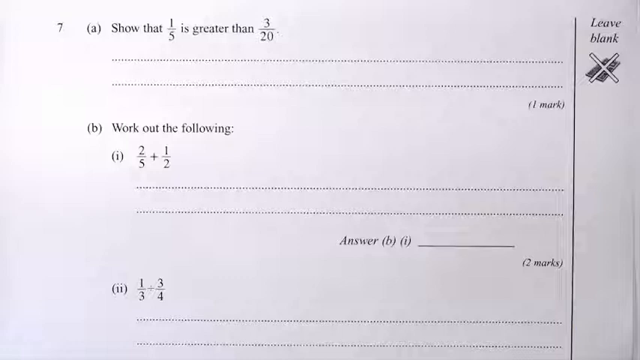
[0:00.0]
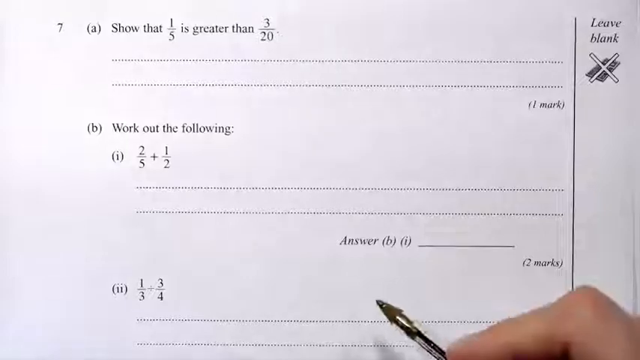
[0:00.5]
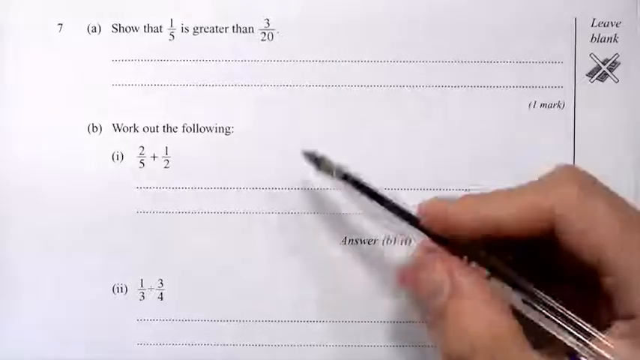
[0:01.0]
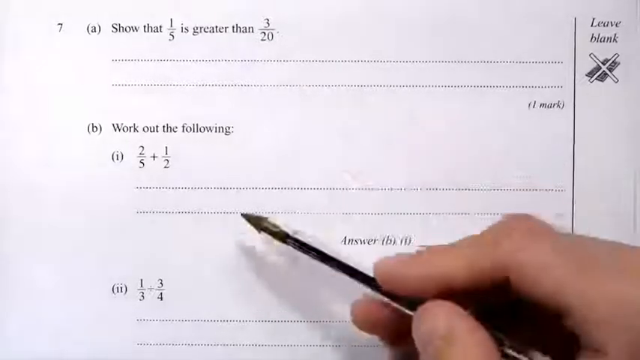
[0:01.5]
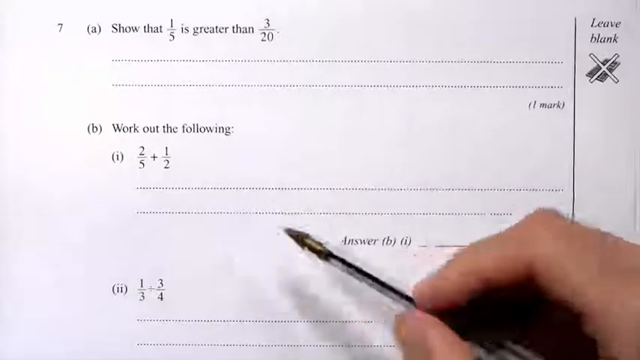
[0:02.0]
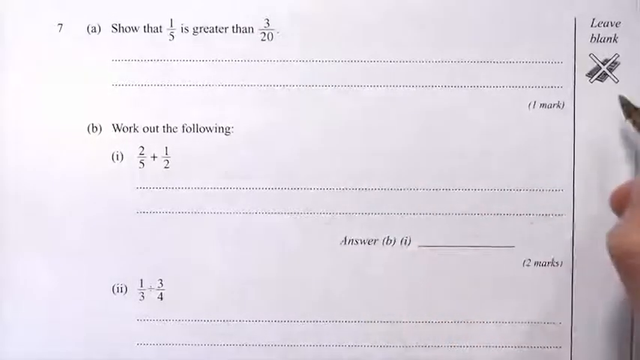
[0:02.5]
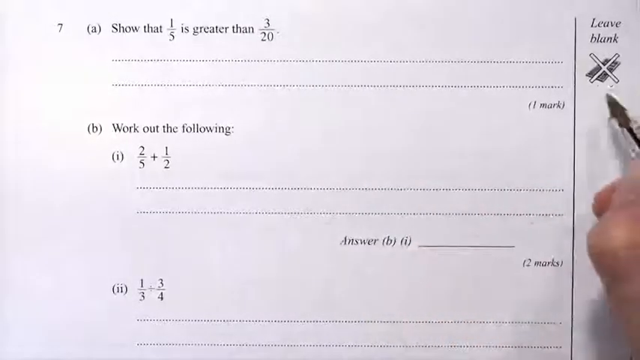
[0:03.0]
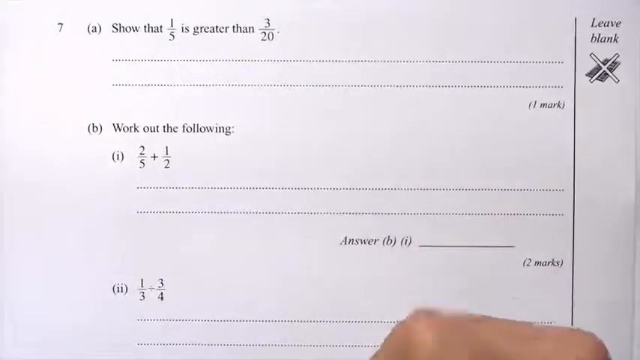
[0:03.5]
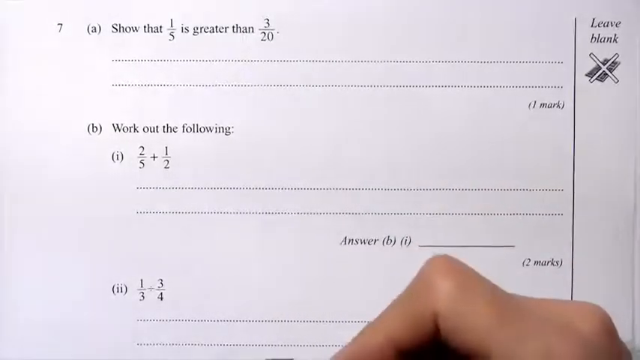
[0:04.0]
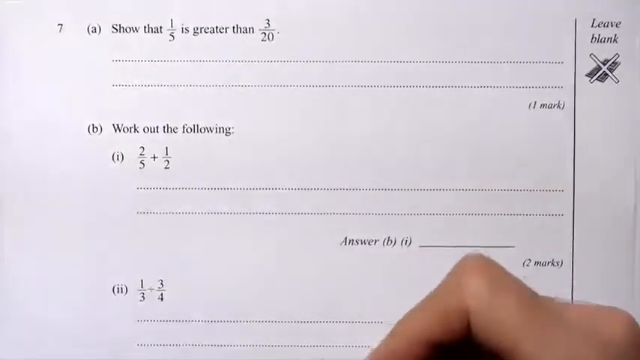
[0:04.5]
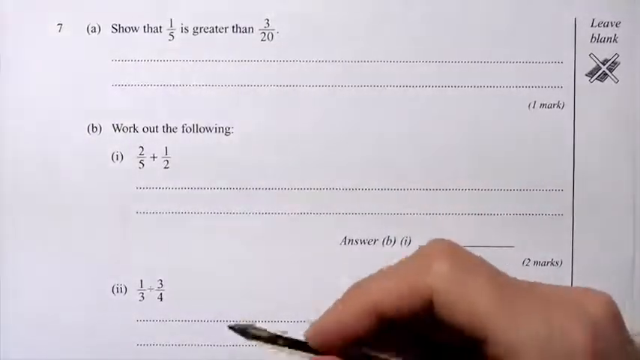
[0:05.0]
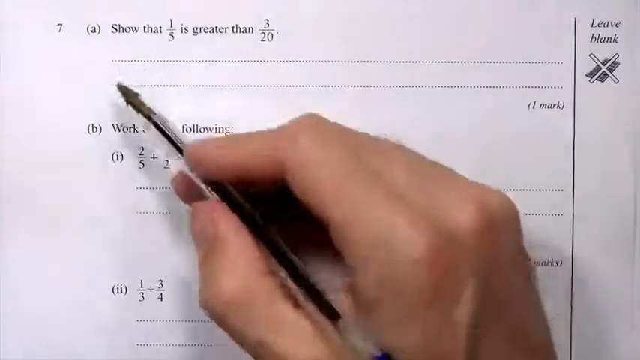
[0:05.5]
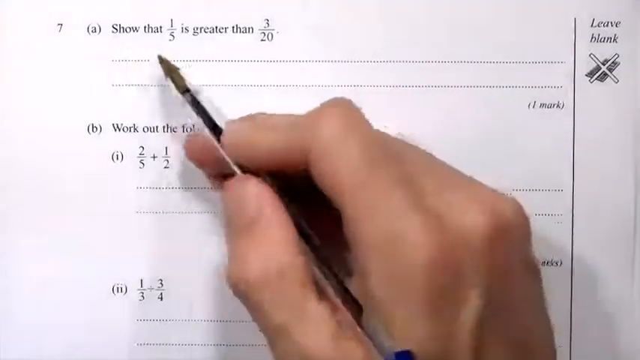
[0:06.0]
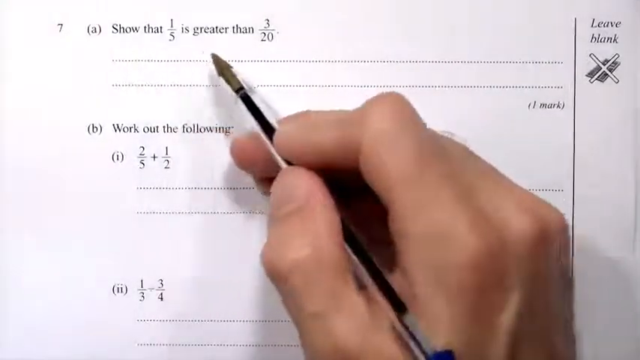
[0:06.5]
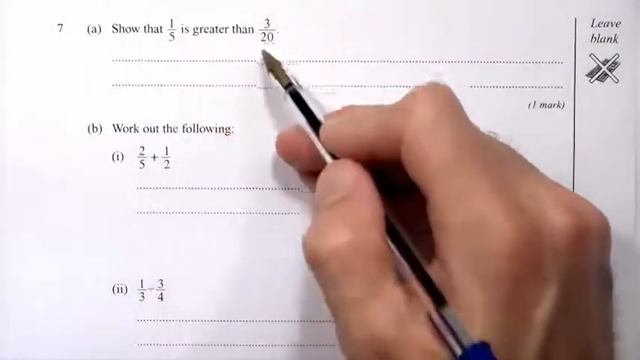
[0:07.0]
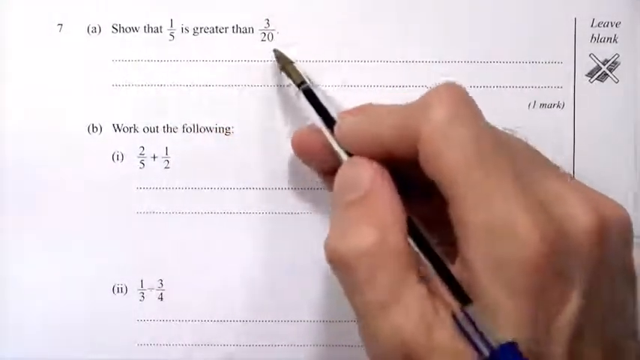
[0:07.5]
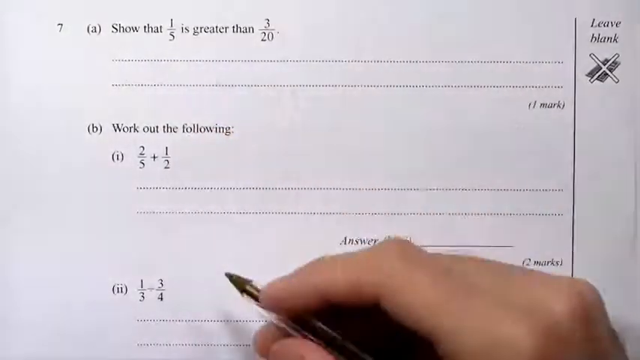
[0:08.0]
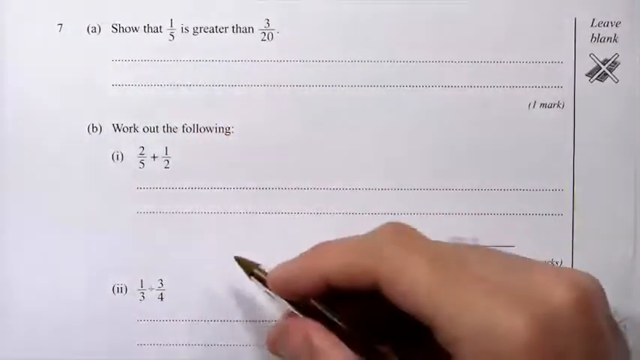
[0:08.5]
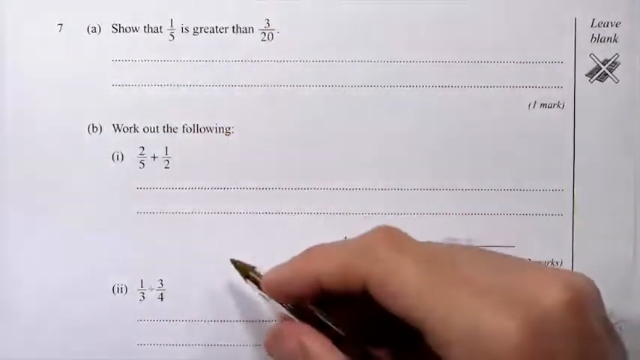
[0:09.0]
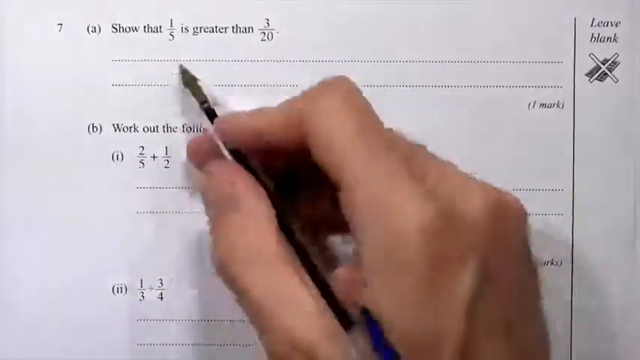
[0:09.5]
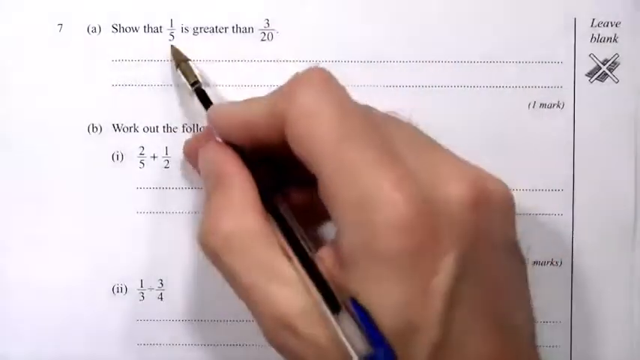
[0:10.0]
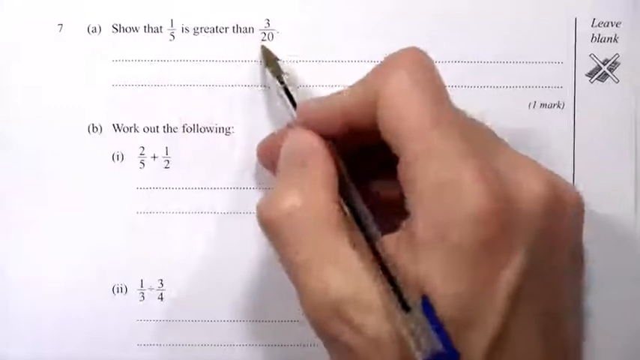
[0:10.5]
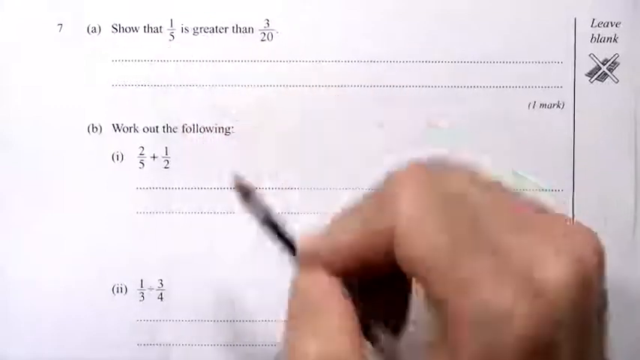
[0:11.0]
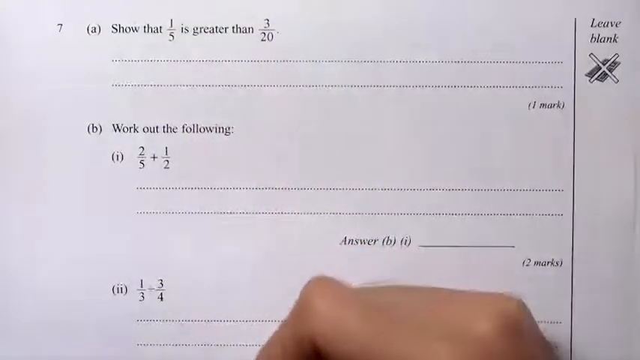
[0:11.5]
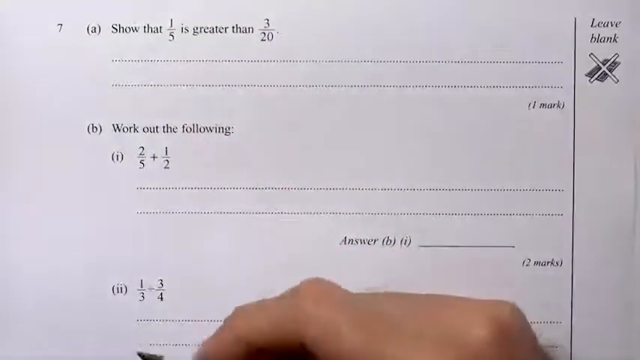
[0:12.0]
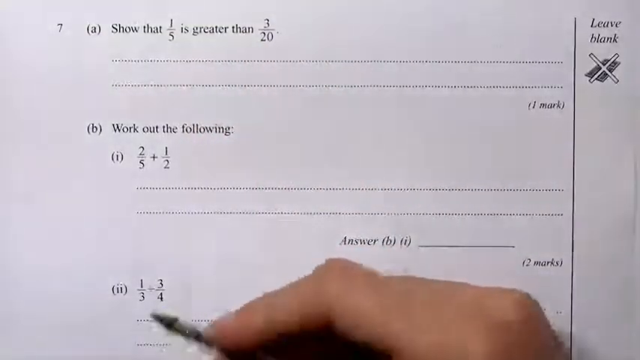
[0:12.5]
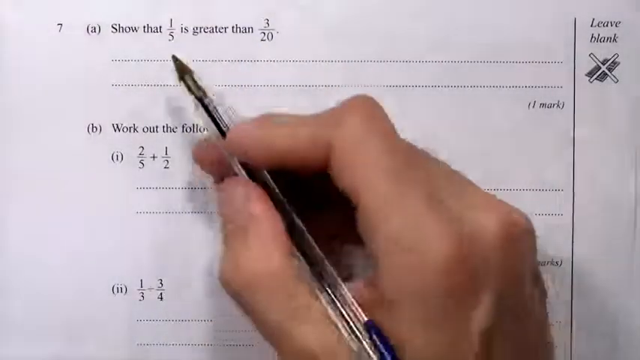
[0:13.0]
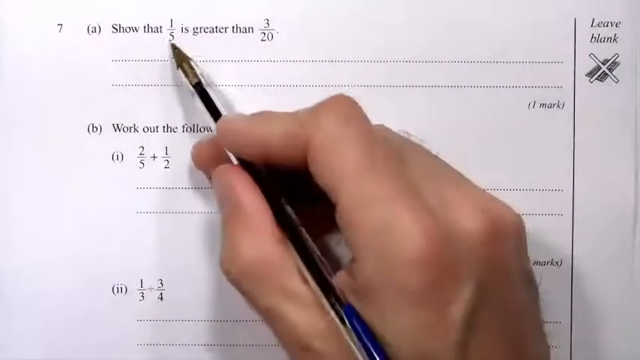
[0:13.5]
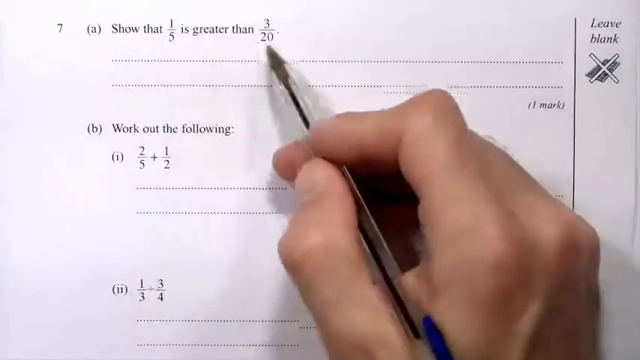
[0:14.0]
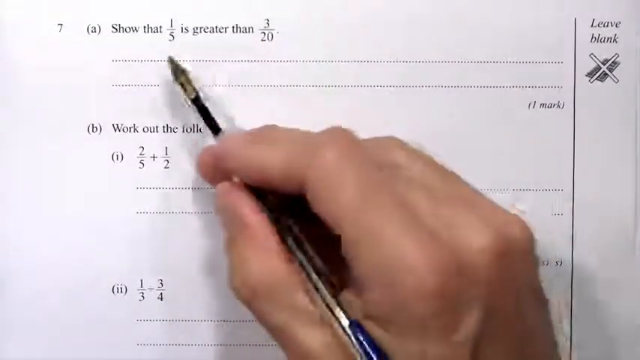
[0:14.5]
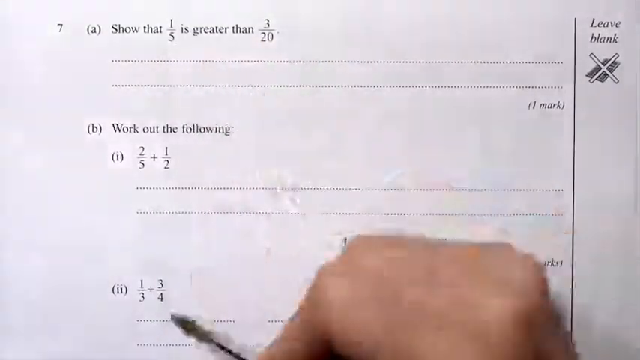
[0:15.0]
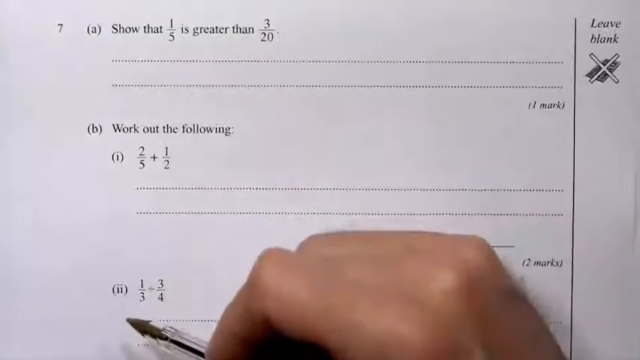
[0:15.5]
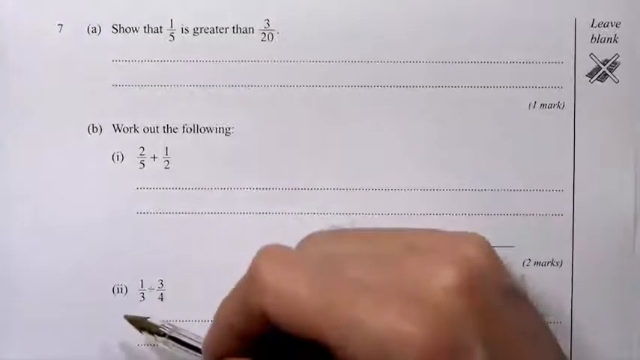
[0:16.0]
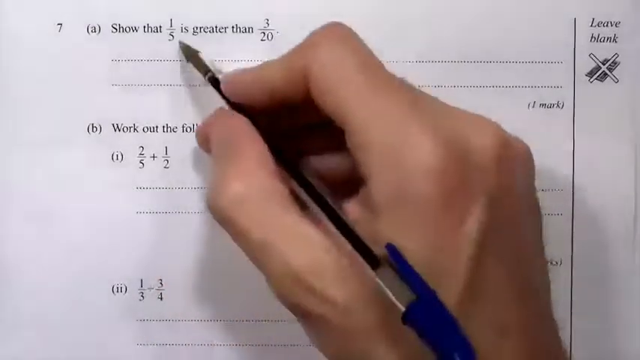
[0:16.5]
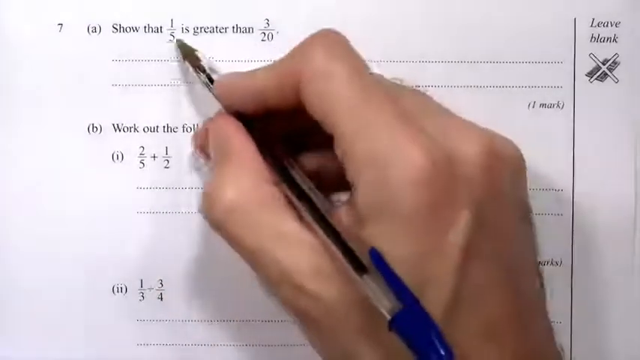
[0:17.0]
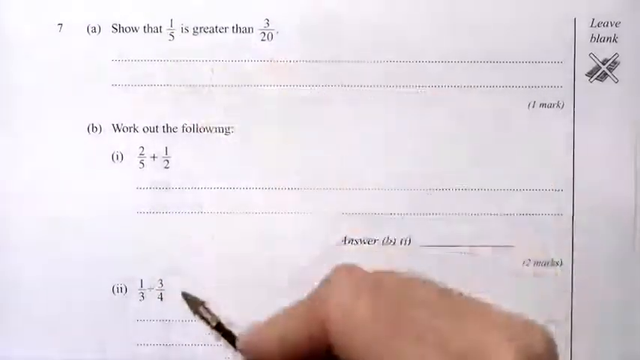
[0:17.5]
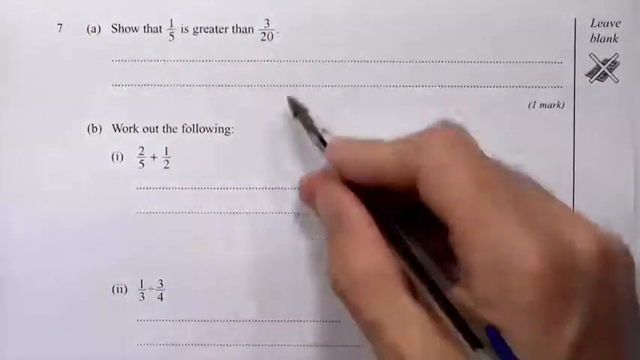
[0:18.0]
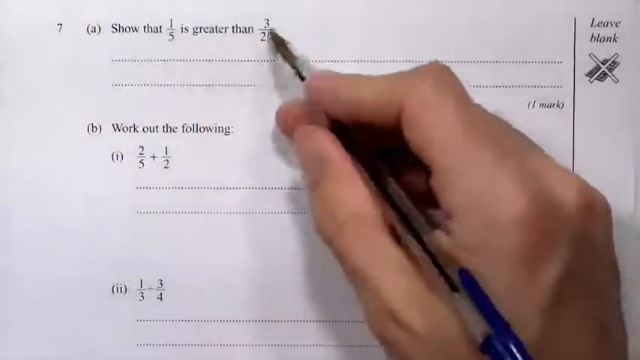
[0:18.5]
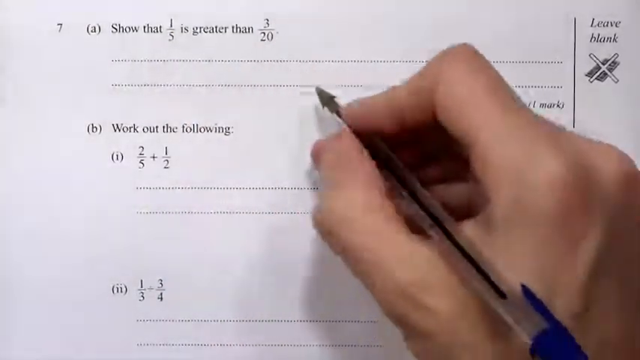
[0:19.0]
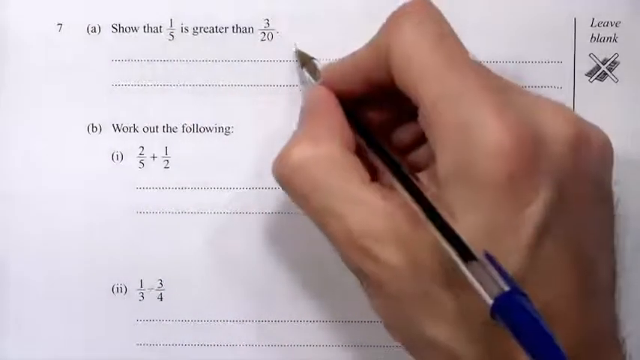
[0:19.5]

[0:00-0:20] A math problem appears to be on screen: question 7, with multiple sub-questions below it, all involving fractions. Part 7a asks to show that 1/5 is greater than 3/20, and part 7b is a sub-question about a different fraction. To the right of the page is a section marked to be left blank, so the sheet could be a test or something similar.